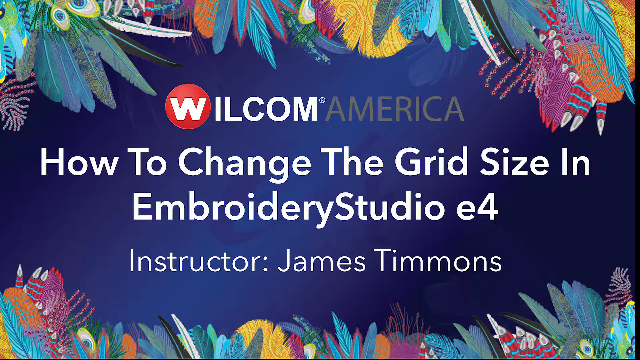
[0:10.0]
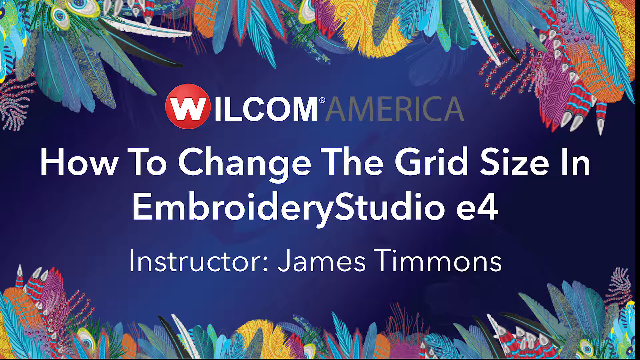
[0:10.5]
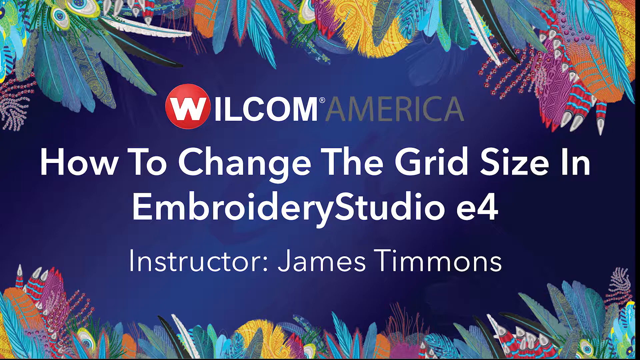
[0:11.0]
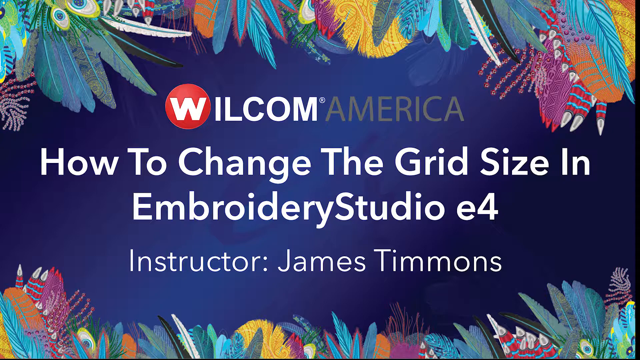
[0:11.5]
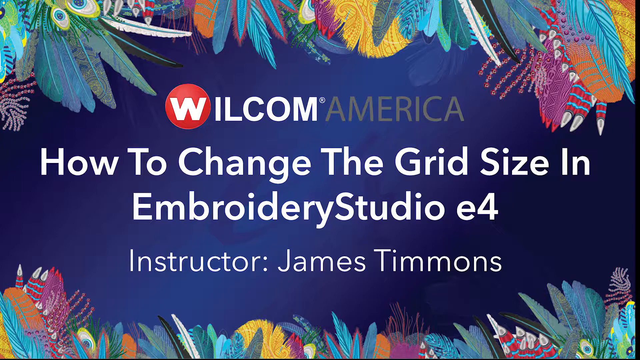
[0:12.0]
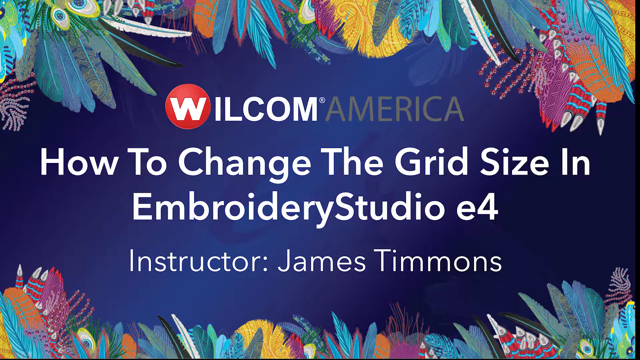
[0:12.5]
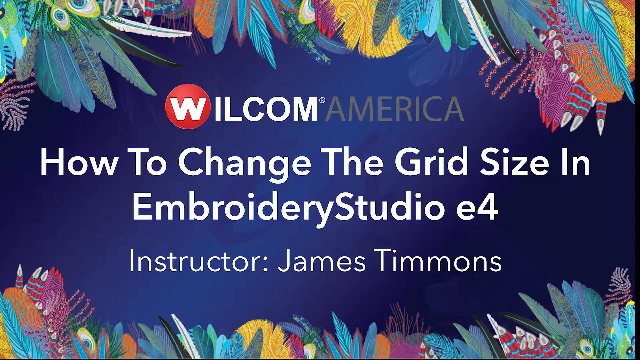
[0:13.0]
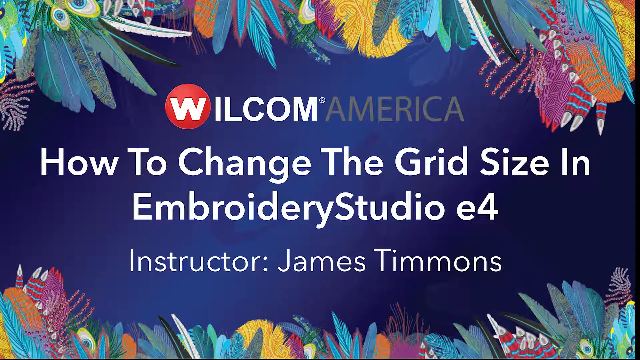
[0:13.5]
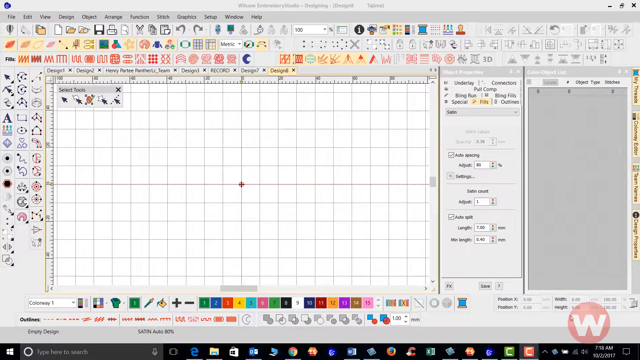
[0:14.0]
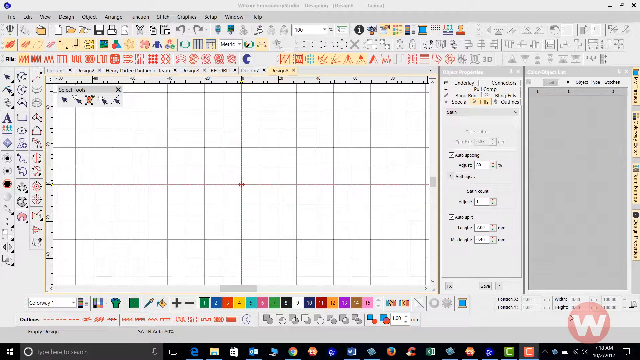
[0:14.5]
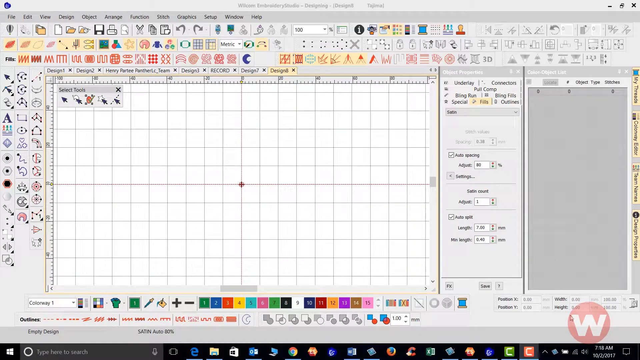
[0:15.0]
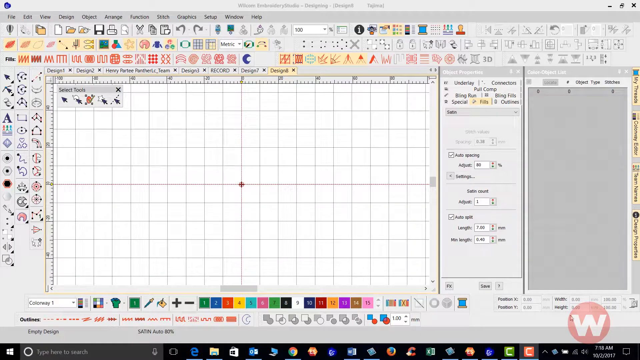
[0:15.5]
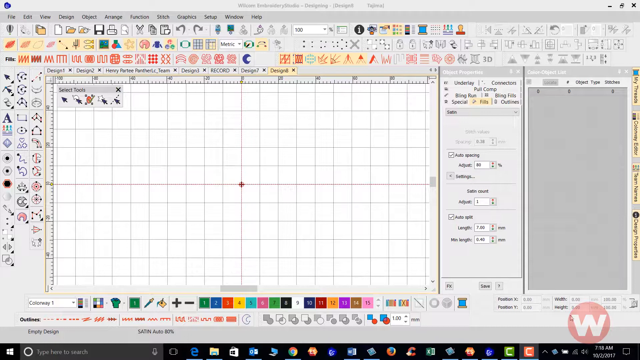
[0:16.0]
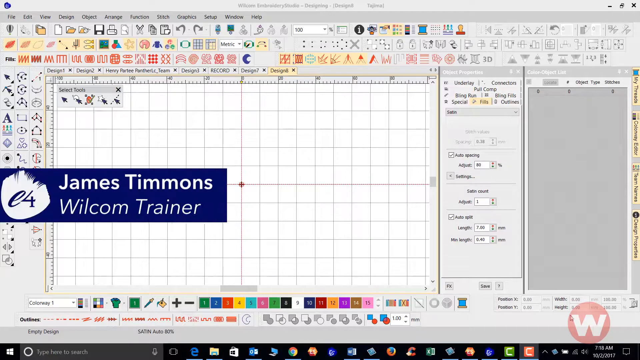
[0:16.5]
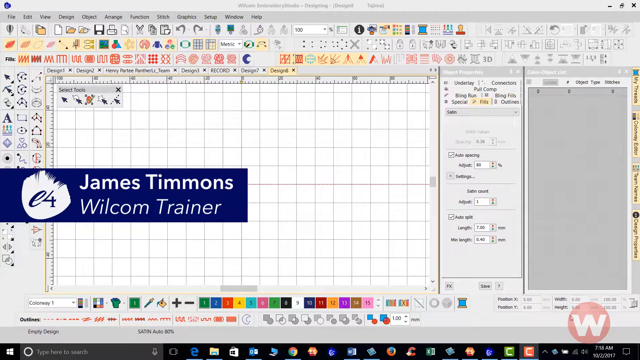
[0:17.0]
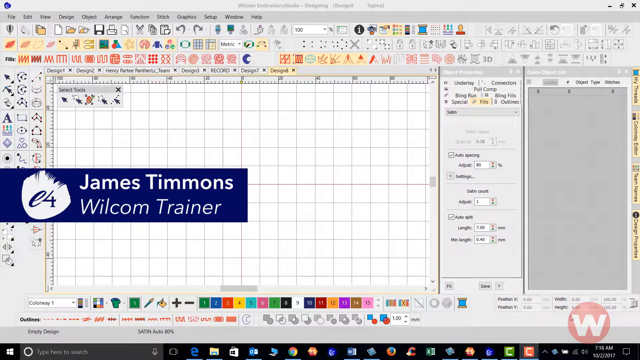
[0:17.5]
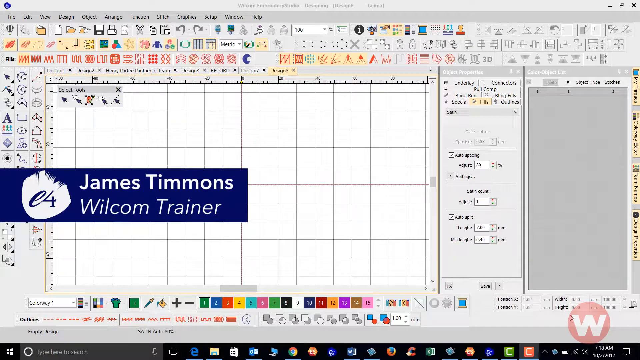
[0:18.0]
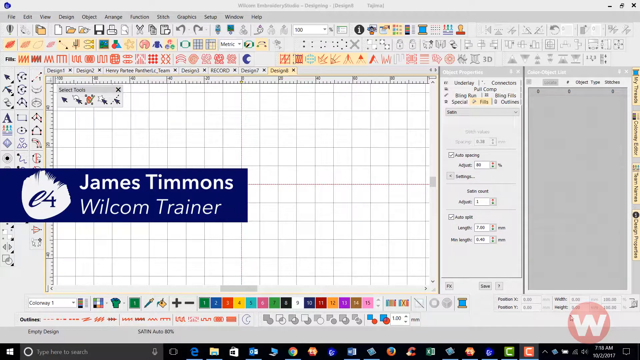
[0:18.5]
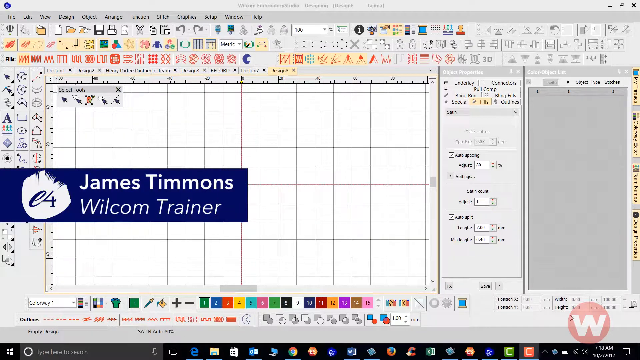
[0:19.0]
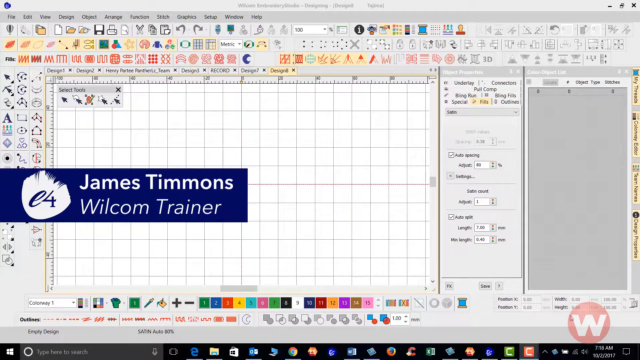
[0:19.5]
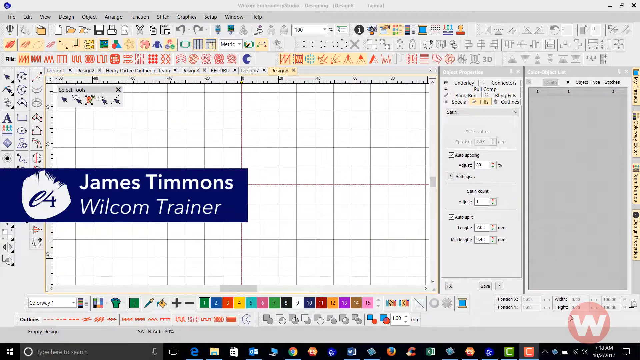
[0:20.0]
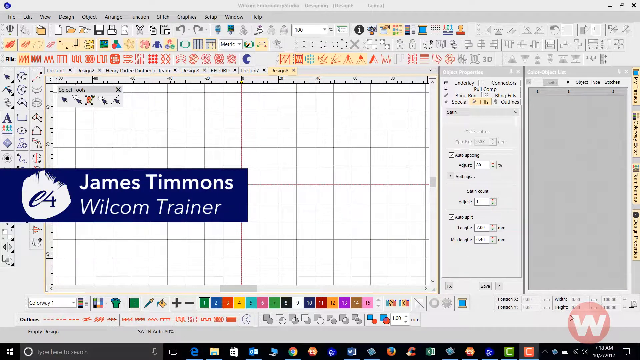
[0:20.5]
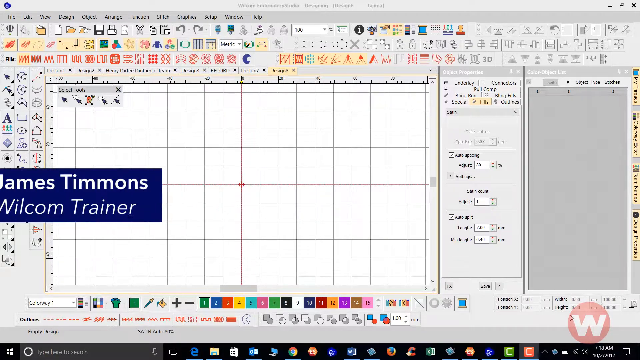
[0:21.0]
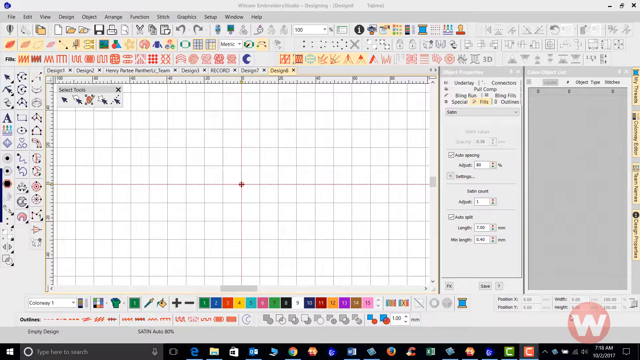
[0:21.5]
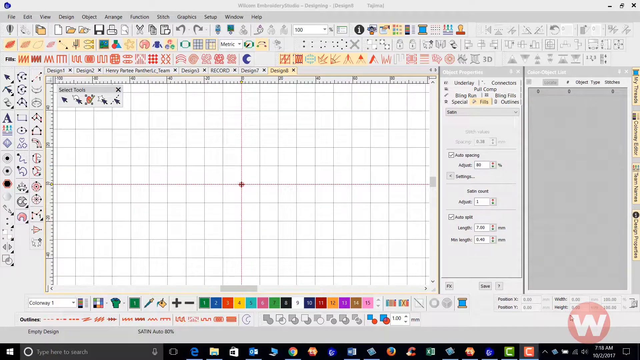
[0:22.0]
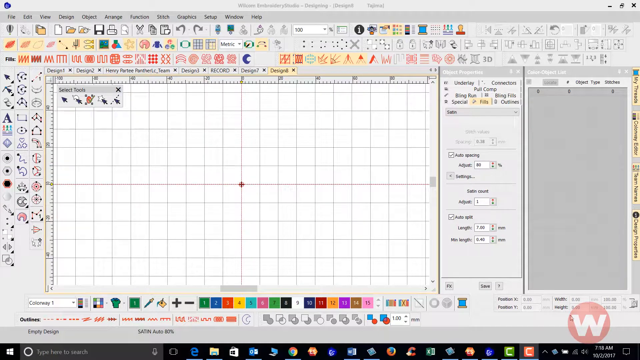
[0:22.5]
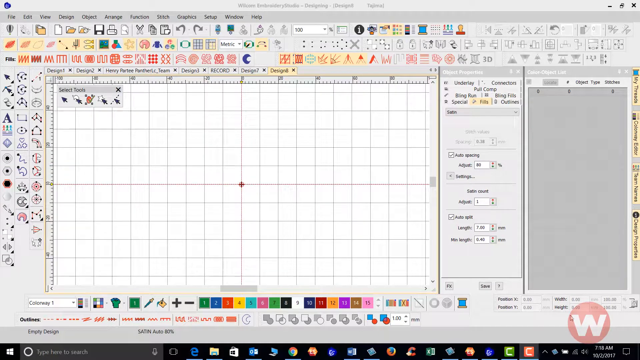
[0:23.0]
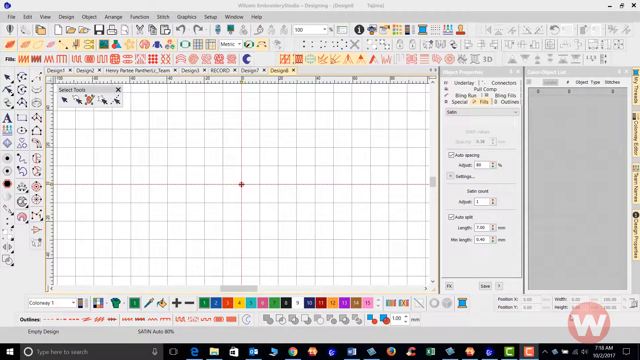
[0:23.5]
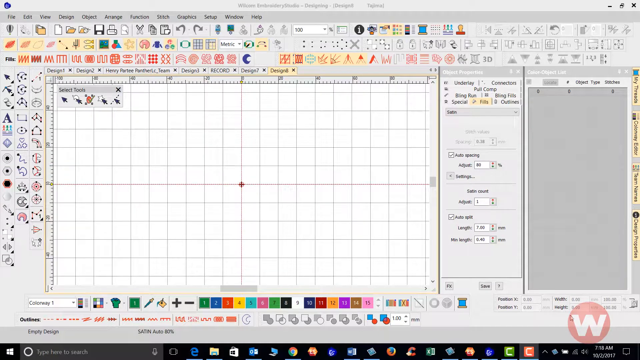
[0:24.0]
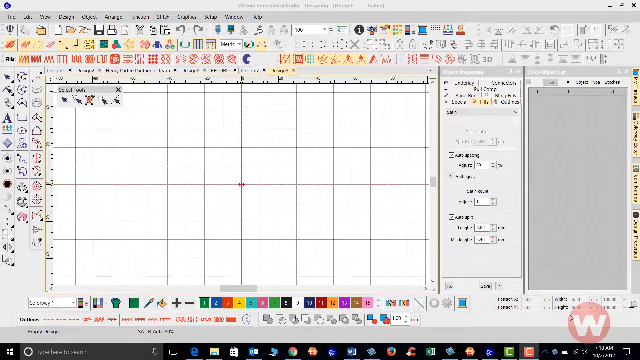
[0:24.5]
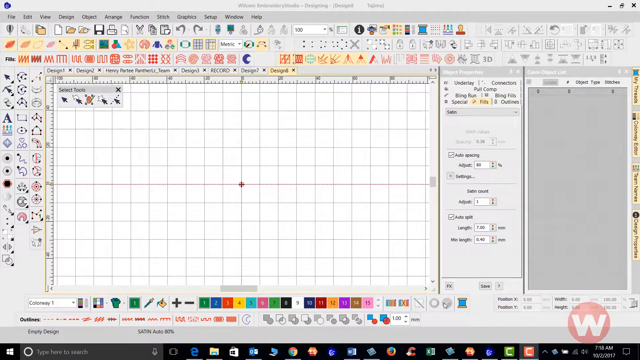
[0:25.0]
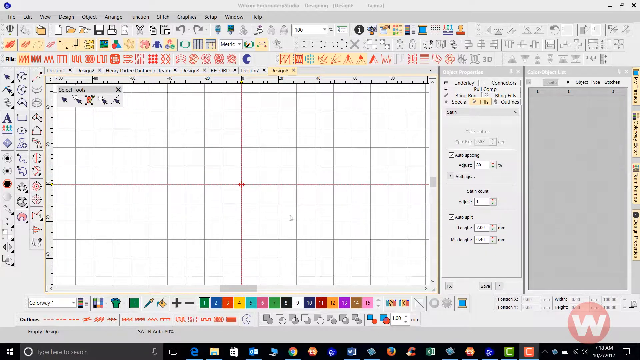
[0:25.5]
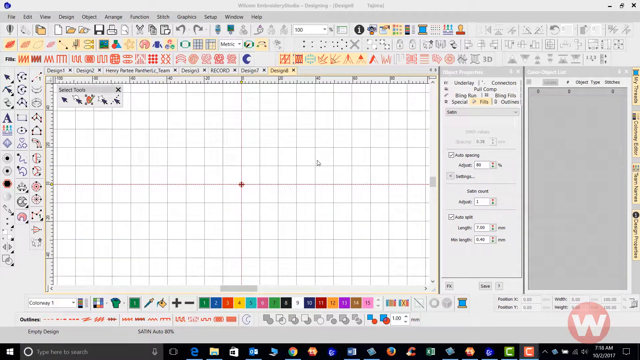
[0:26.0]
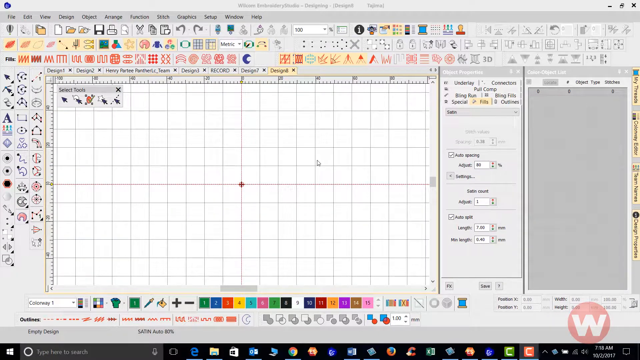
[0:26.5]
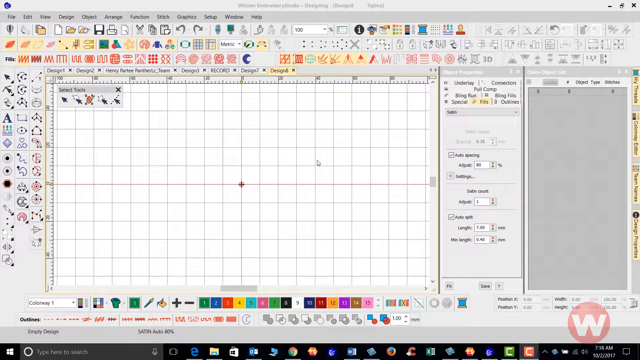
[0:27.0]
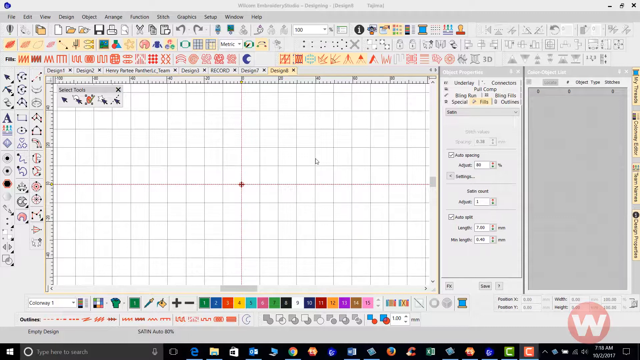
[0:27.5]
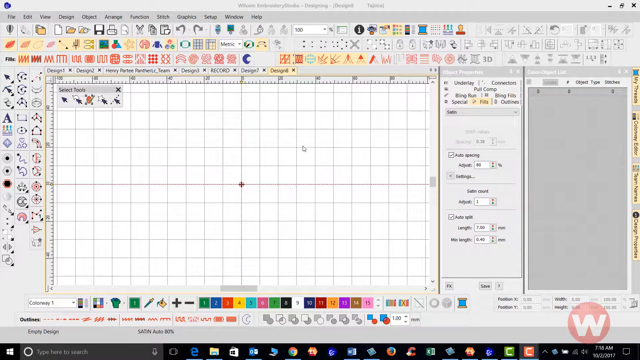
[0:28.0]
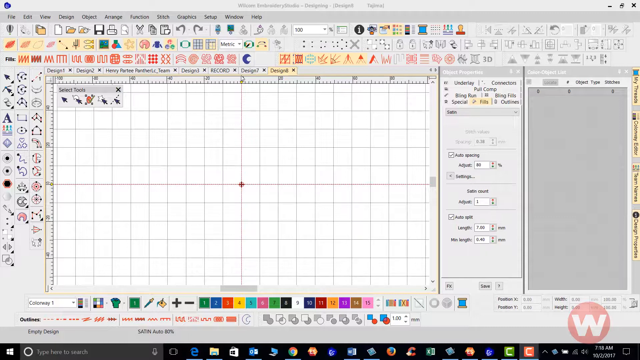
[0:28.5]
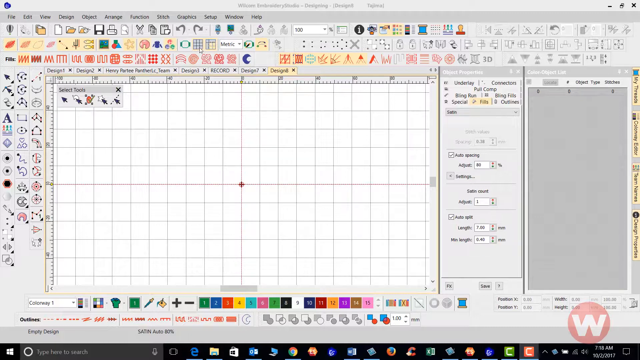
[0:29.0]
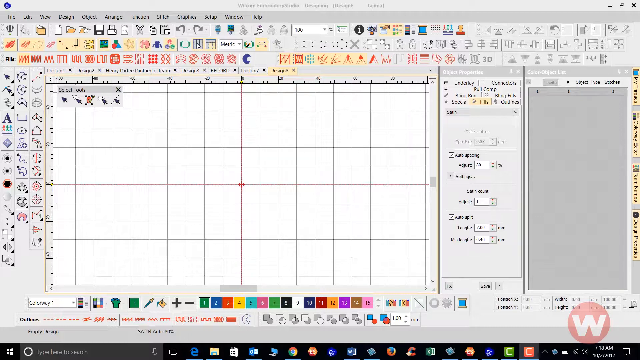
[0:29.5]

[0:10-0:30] The instructor's name, James Timmons, Wilcom trainer, appears in white on a blue background. A shared screen shows a white grid with black lines and many icons, with multiple functions in multiple colors. The software looks somewhat like a Microsoft app, though apparently it is not one. The menu shows File, Edit, View, Design, Object, Arrange, Functions, Teach, Graphics, Setup, Window, and Help. A save dialog shows where the working document can be saved, listing multiple files. A side panel has spacing adjustments, including an auto spacing function, a settings box, and a box for connections. A cursor moves across the screen.